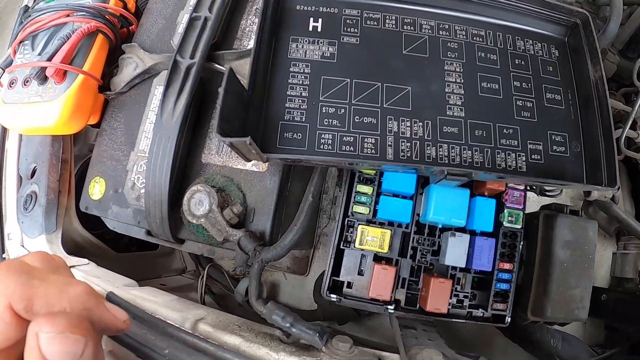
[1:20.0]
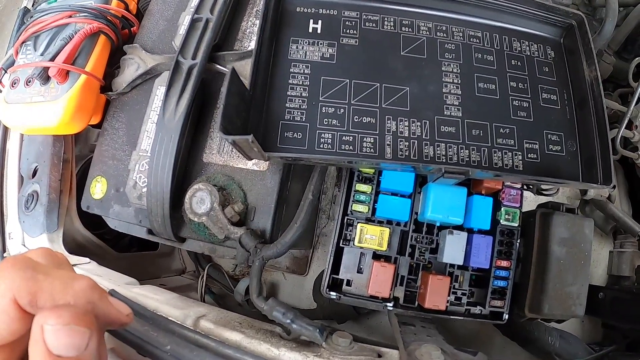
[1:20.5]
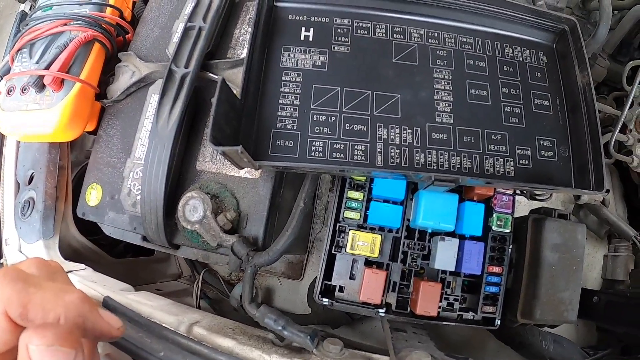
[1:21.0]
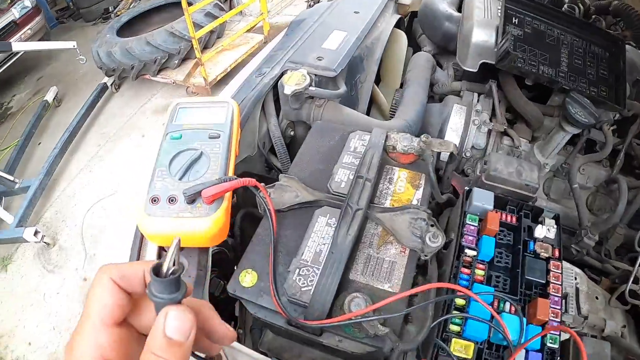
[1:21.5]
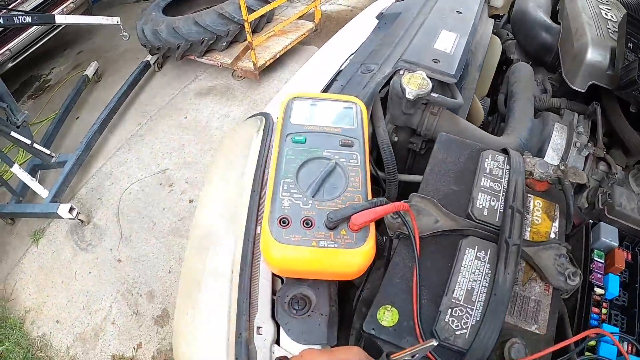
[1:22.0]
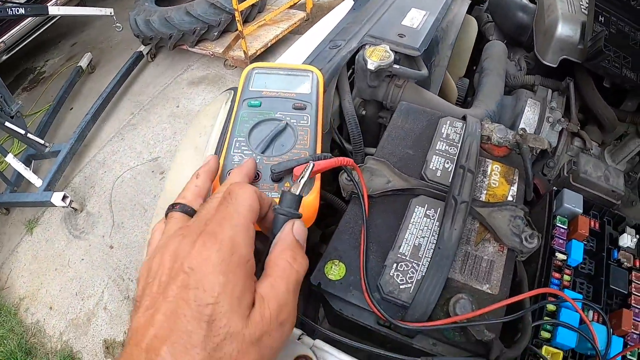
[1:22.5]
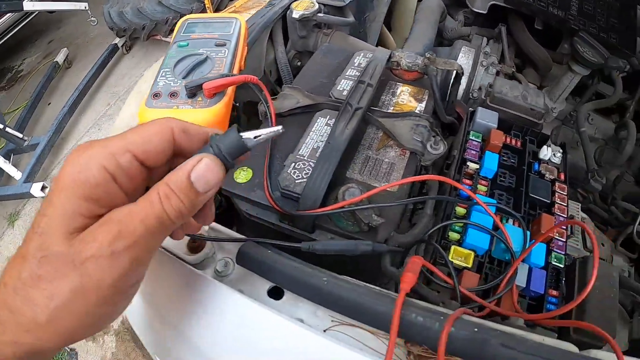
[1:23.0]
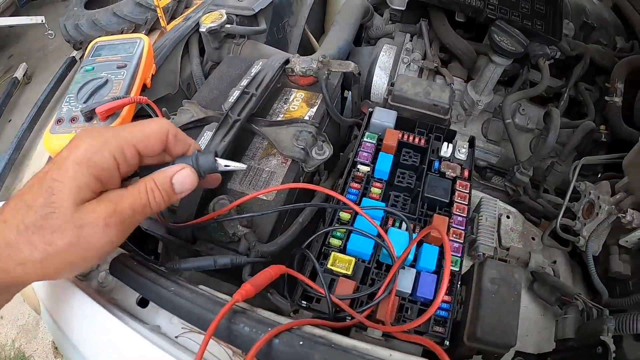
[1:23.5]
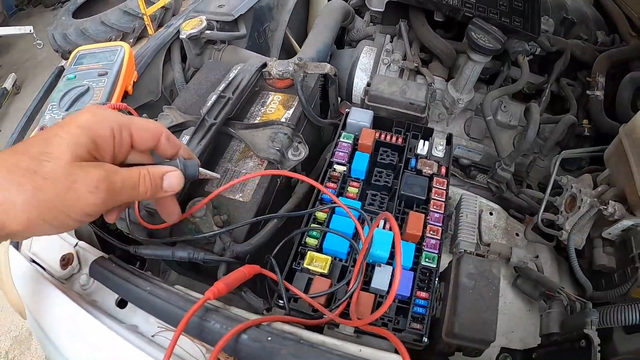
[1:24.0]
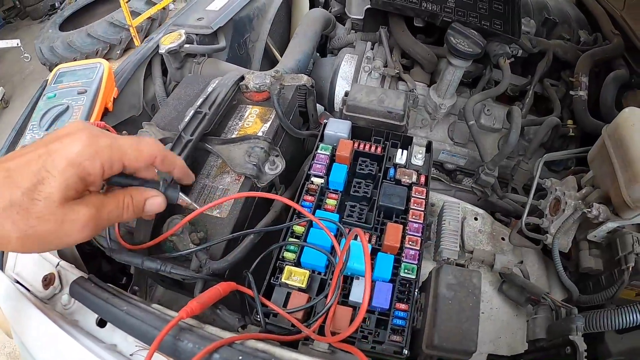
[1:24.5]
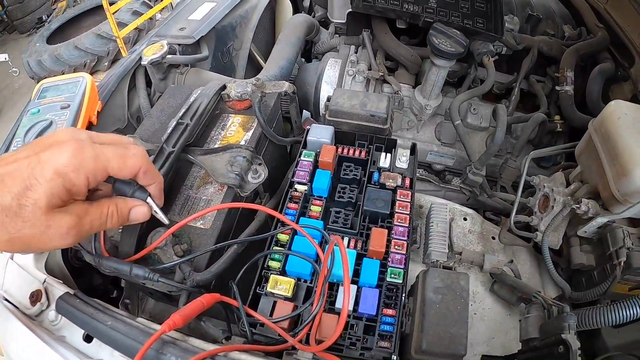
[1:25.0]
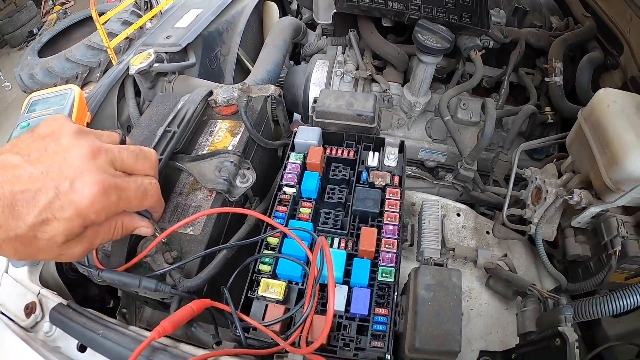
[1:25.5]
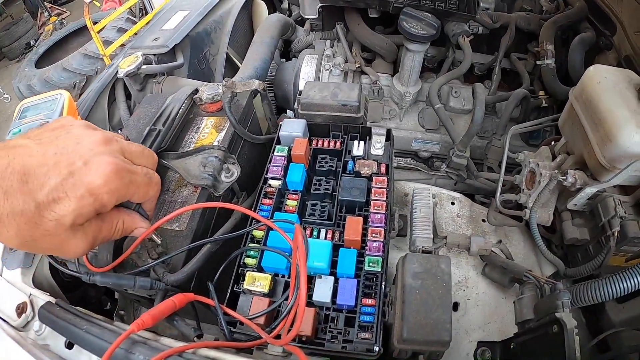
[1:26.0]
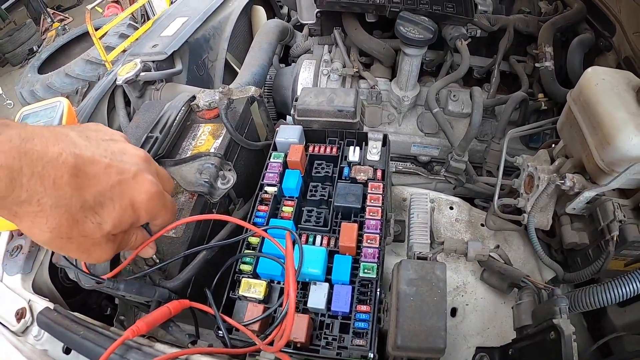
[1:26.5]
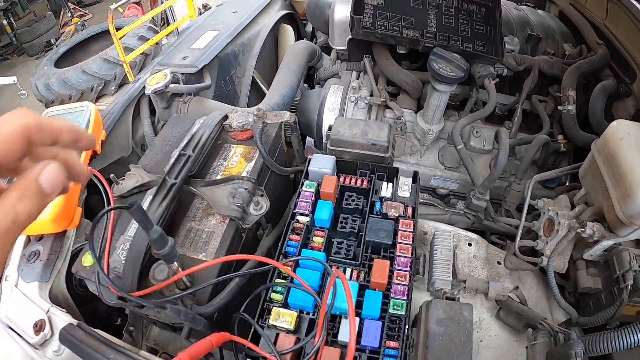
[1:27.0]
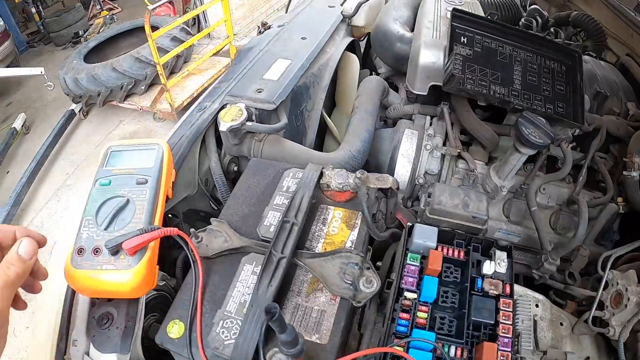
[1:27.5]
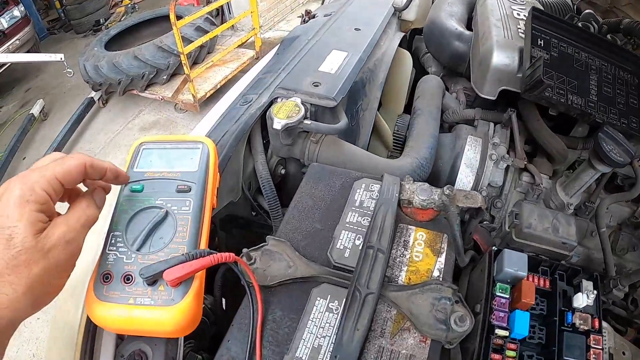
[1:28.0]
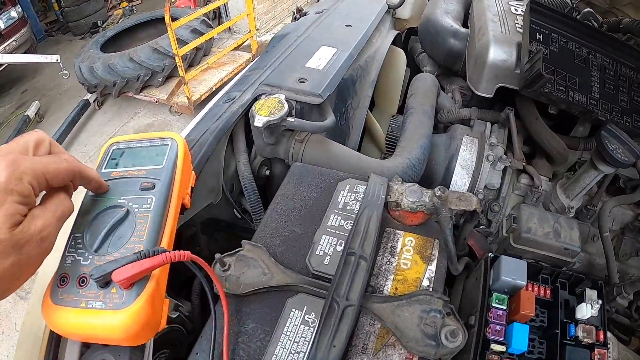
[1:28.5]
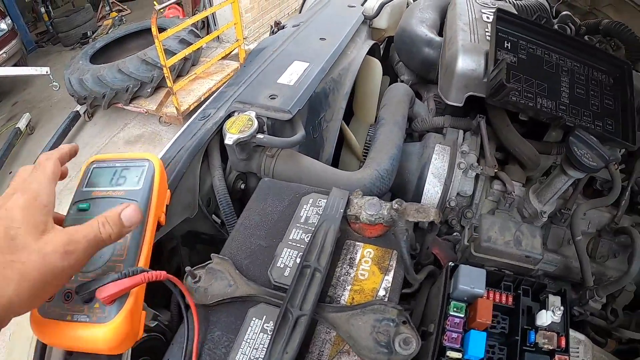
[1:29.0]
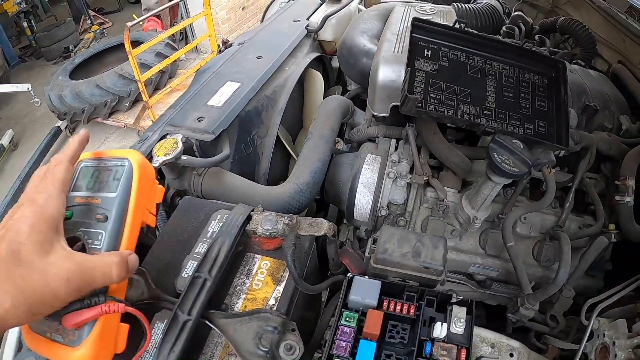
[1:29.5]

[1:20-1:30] The black lid is turned over, with an "H" in its upper left-hand corner and many boxes. Some boxes are labeled, and some have a line running diagonally from the top right to the lower left. Labels include "DOME", "M1", one that seems to read "C/" (possibly an O rather than a C), and "PN". The person holds a black clamp with a silver tip, connected to some type of monitor, and clamps it onto a piece of the car.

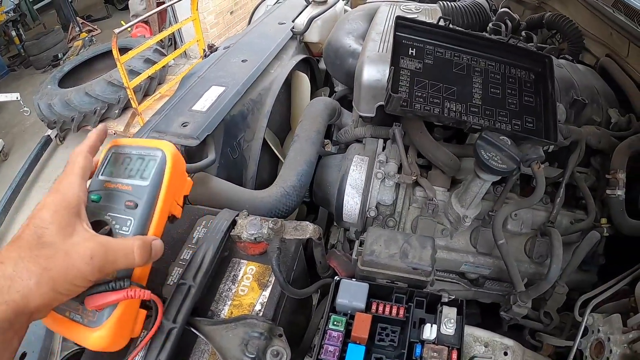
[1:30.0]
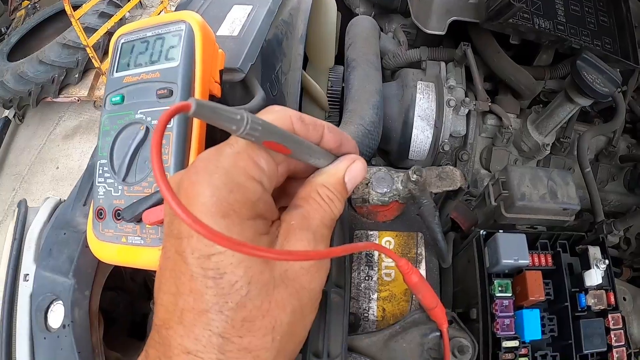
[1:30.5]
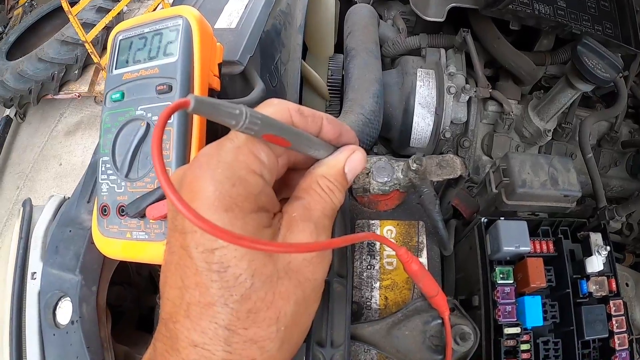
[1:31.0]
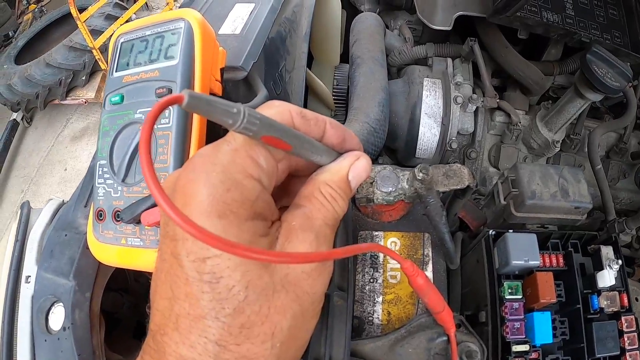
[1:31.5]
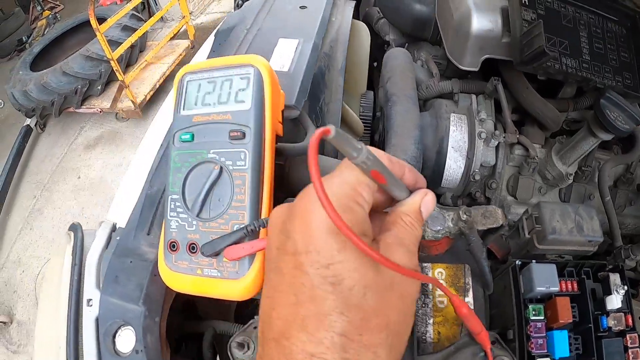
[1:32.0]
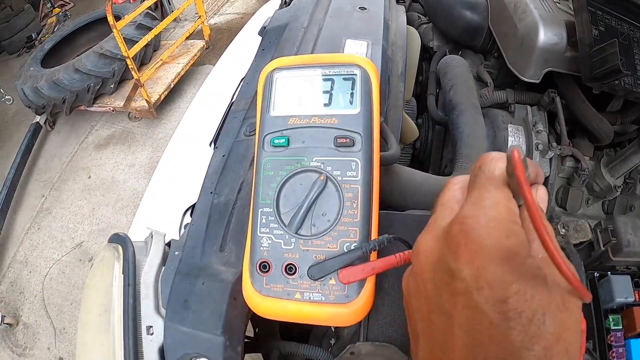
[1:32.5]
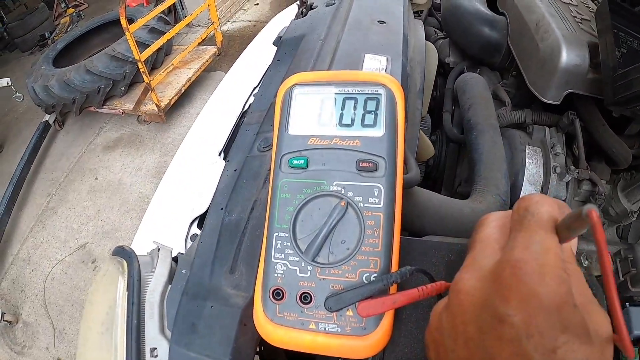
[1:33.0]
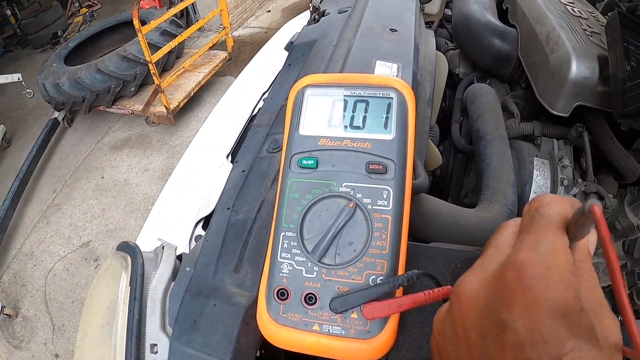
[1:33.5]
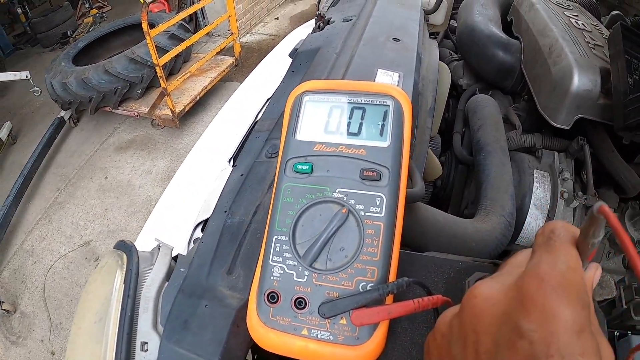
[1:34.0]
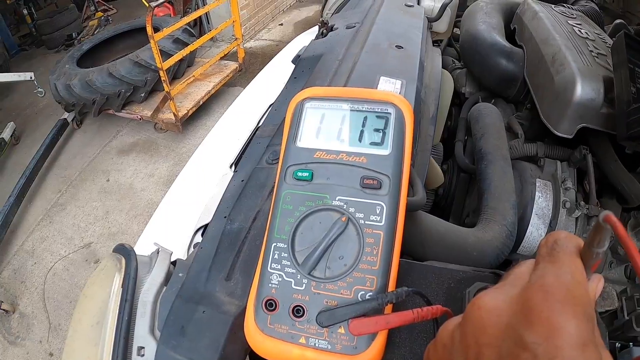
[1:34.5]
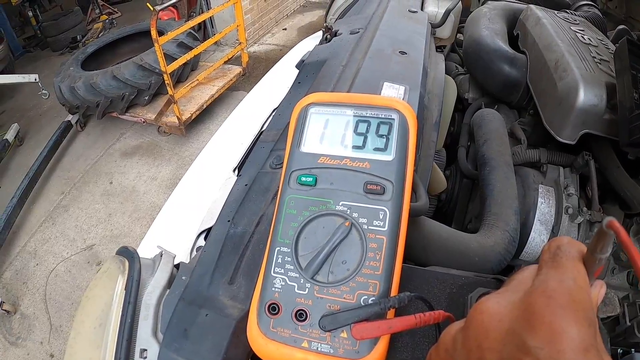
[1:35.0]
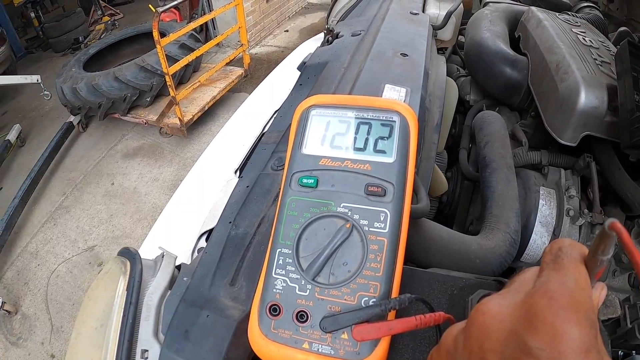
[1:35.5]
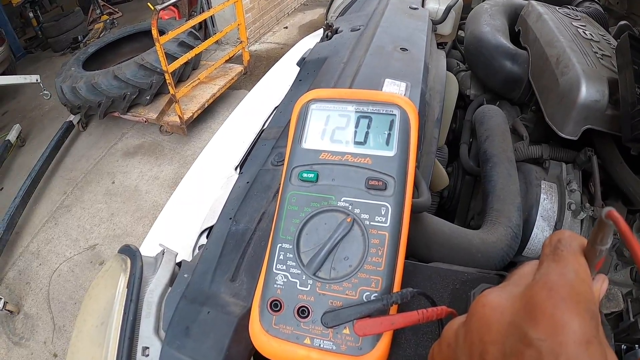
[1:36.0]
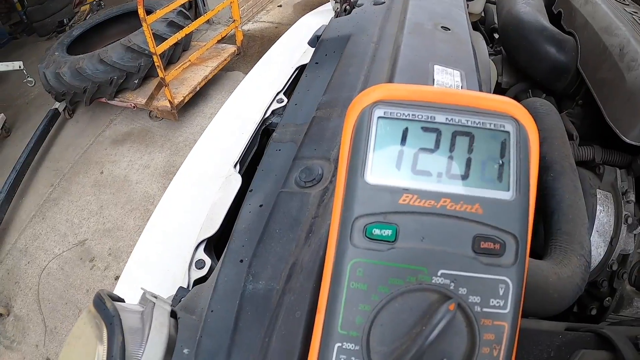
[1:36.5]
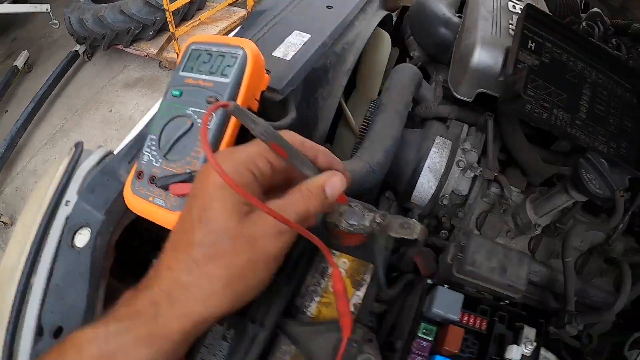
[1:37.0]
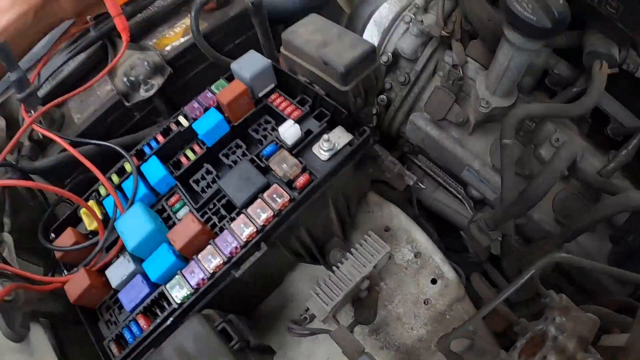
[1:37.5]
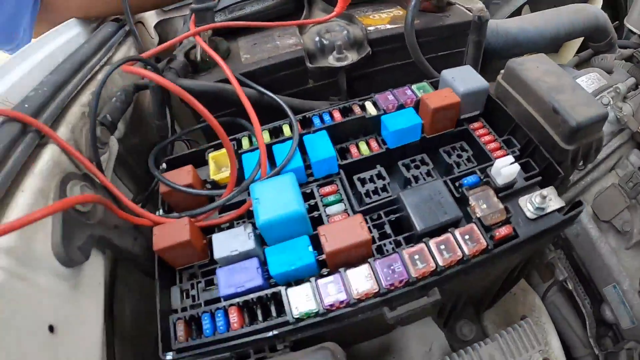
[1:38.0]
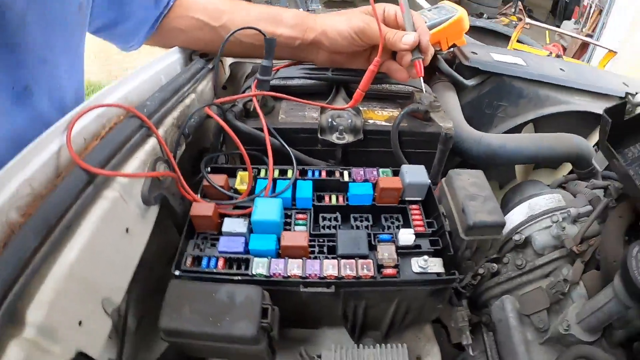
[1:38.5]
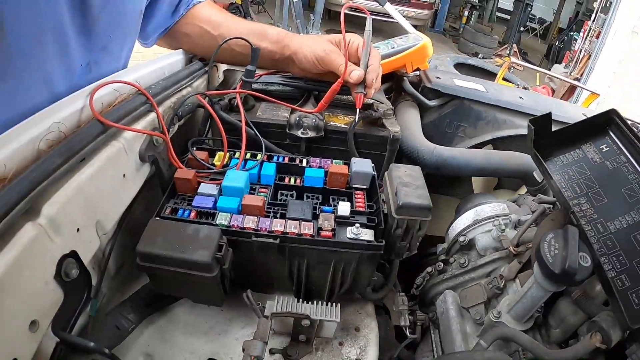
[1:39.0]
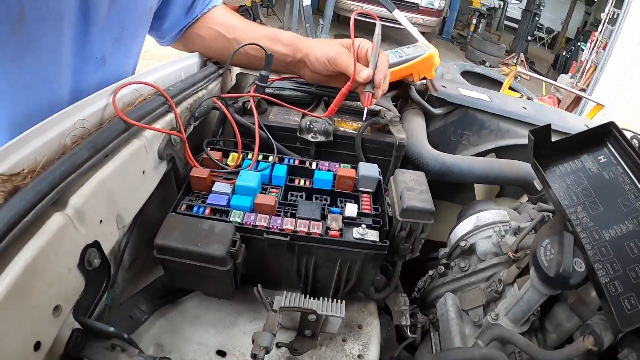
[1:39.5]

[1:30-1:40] The person holds a meter with his left hand, thumb on the right side and the other fingers on the other side. It has a rectangular screen like a calculator screen that displays numbers, and red and black cords are hooked up to it. At one point the numbers read "12.02", then the reading jumps up and there is a glare on the screen as it adjusts. He then shows some of the button colors, blue and red.